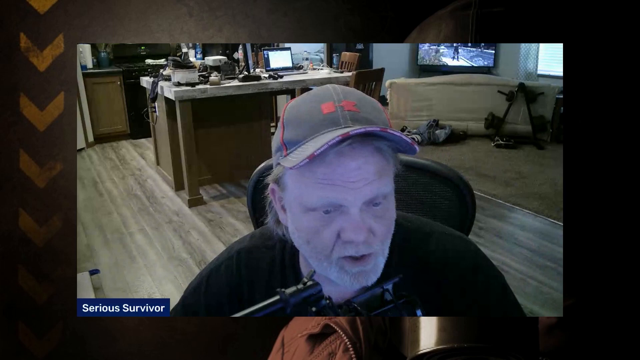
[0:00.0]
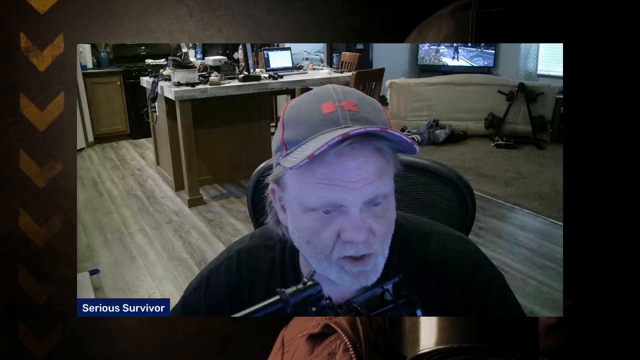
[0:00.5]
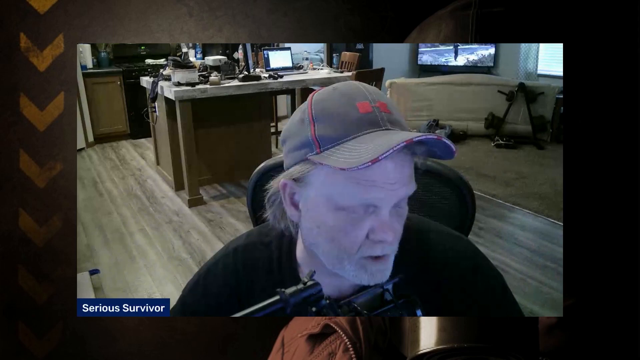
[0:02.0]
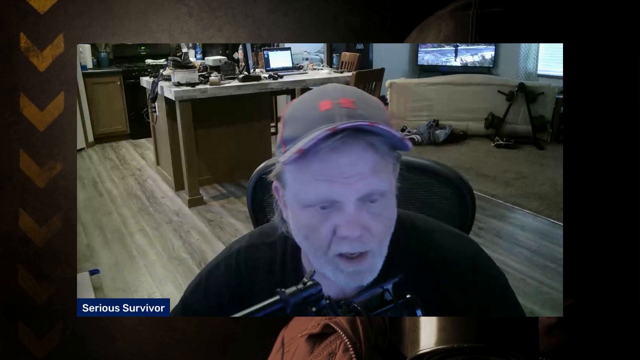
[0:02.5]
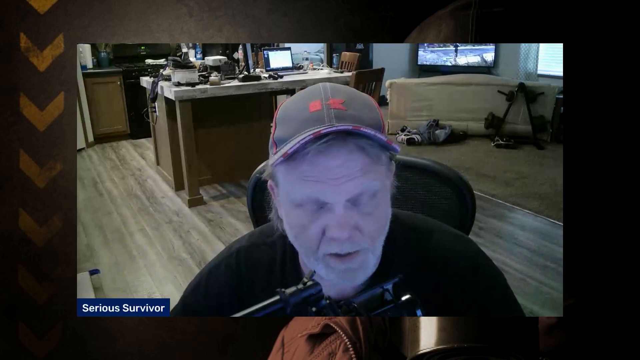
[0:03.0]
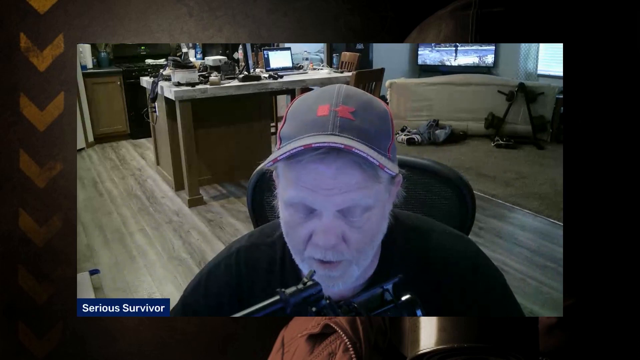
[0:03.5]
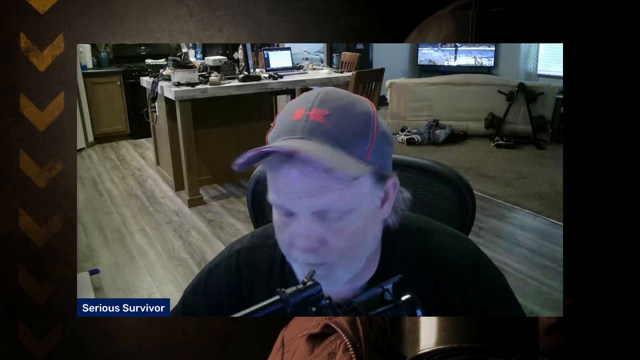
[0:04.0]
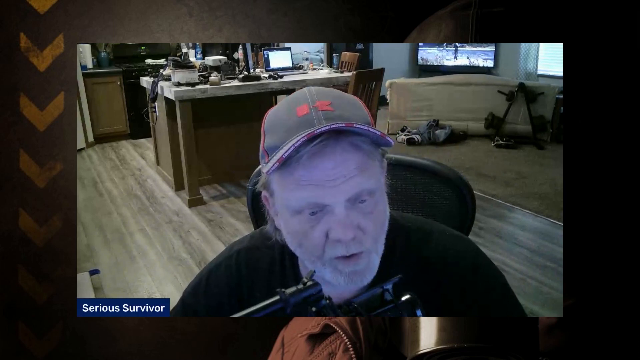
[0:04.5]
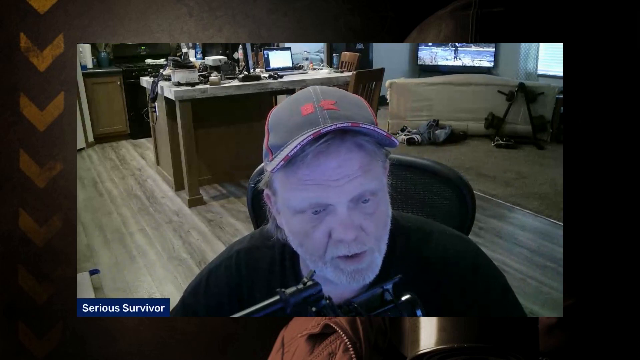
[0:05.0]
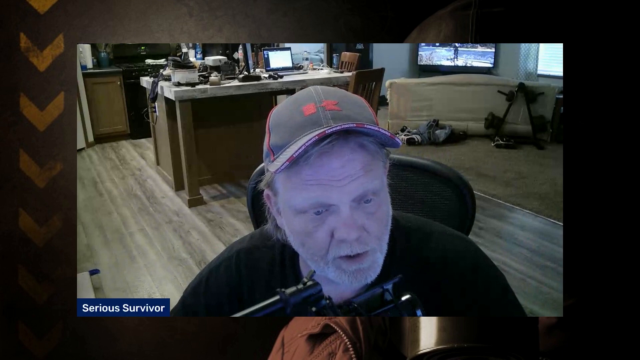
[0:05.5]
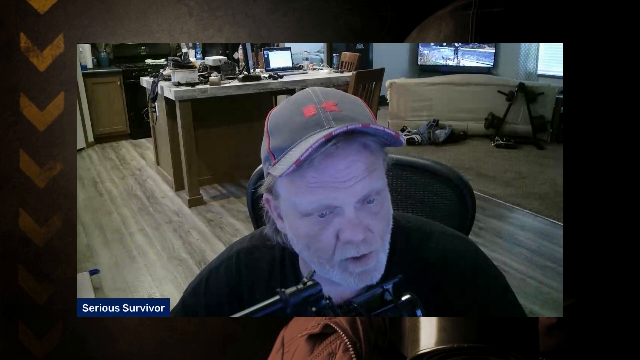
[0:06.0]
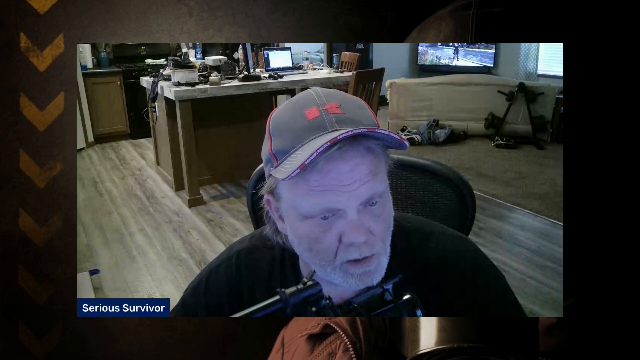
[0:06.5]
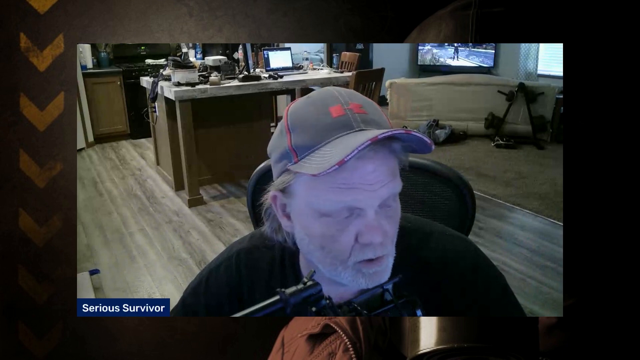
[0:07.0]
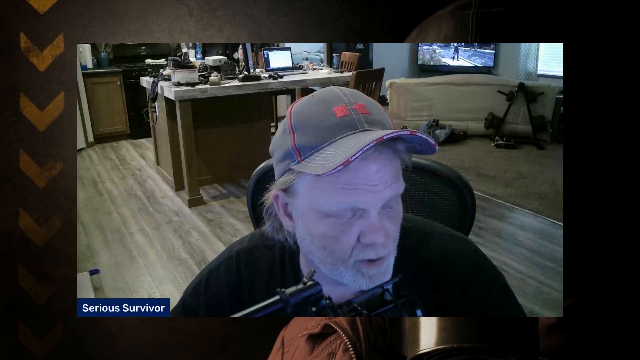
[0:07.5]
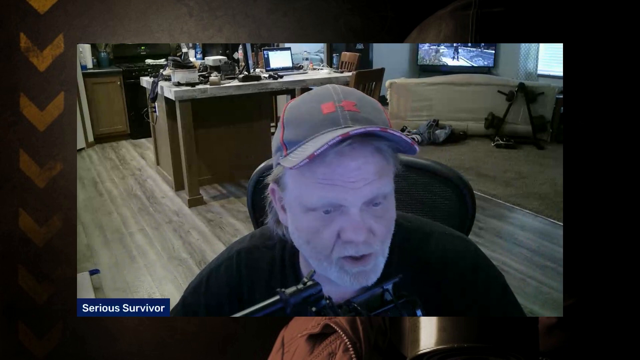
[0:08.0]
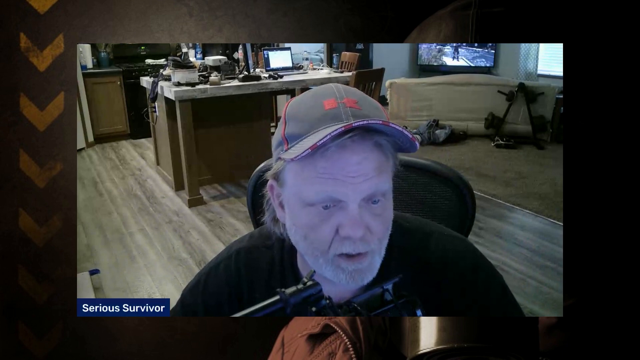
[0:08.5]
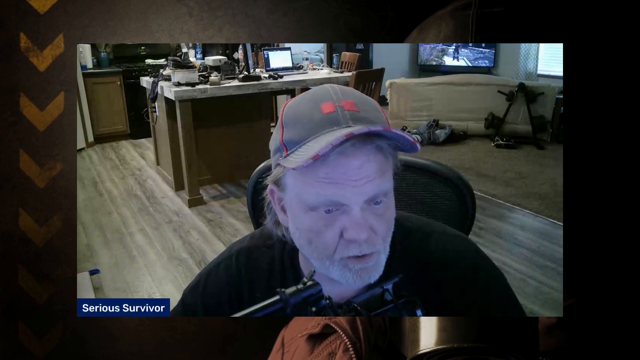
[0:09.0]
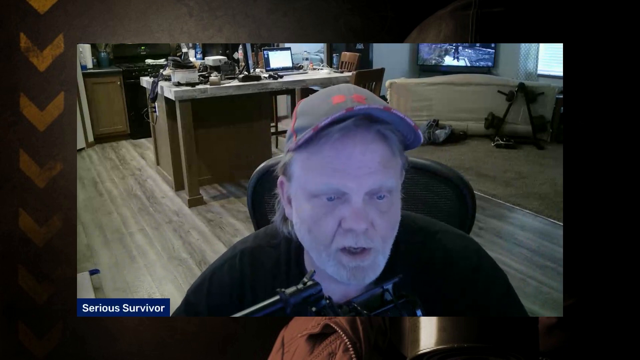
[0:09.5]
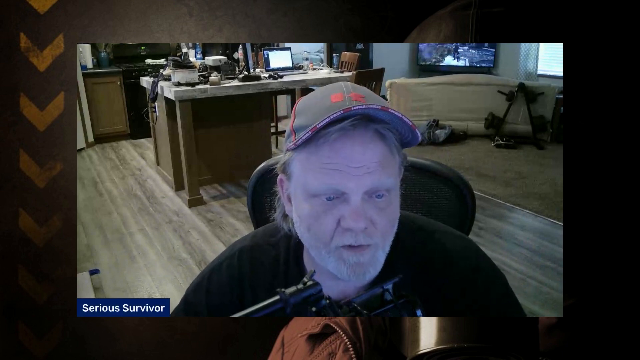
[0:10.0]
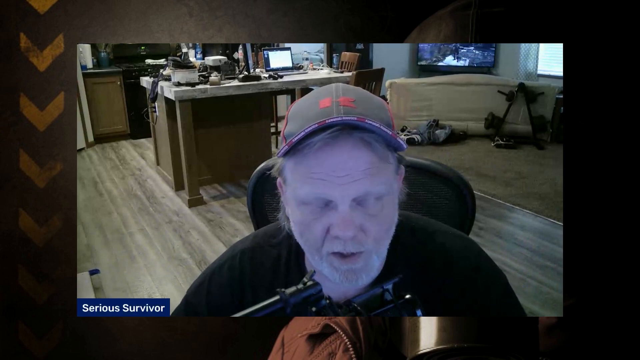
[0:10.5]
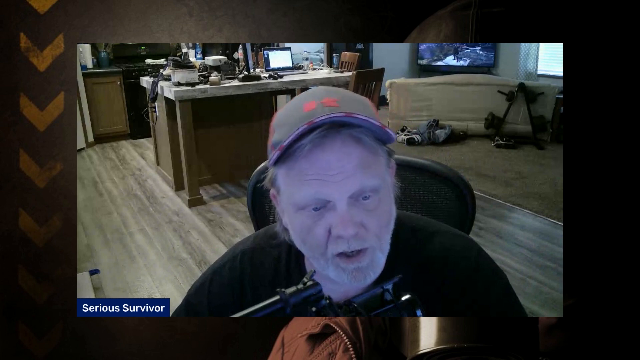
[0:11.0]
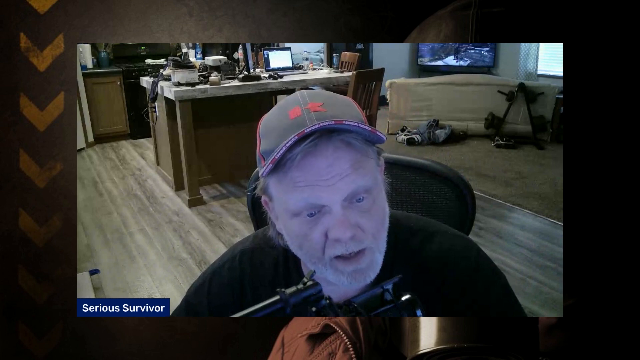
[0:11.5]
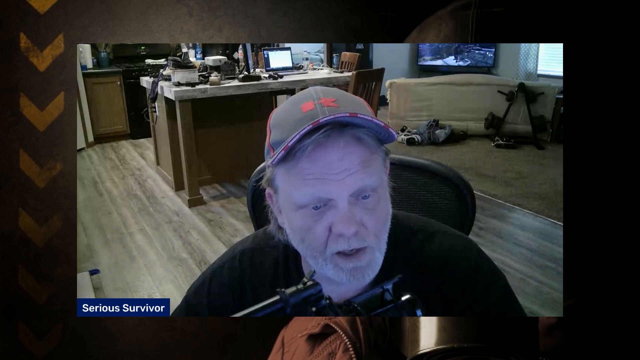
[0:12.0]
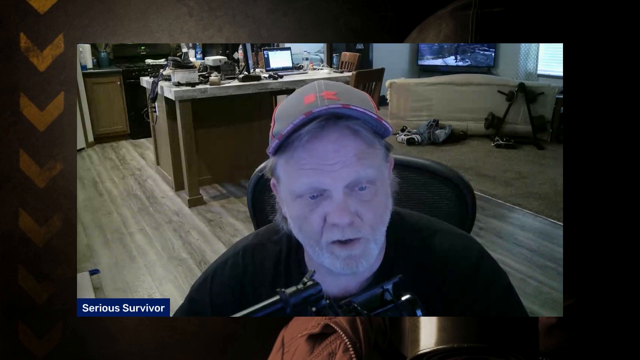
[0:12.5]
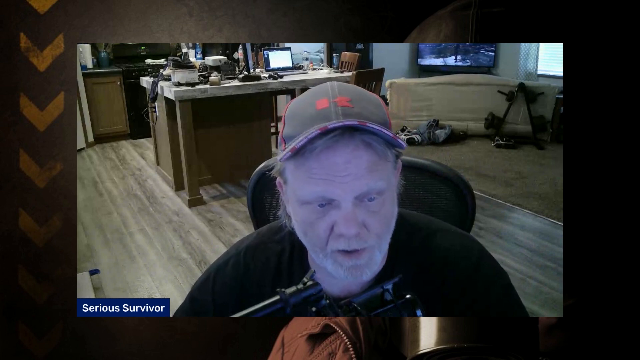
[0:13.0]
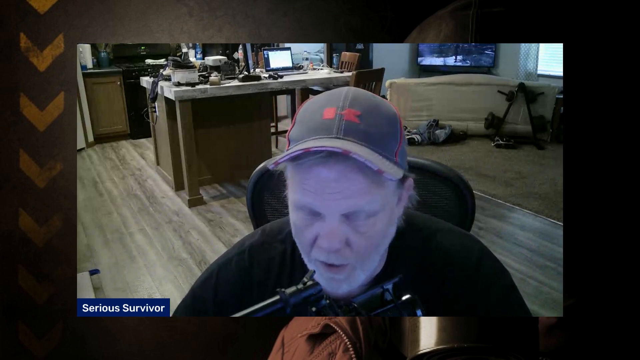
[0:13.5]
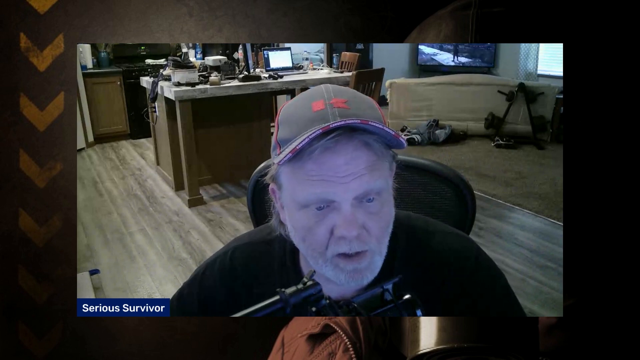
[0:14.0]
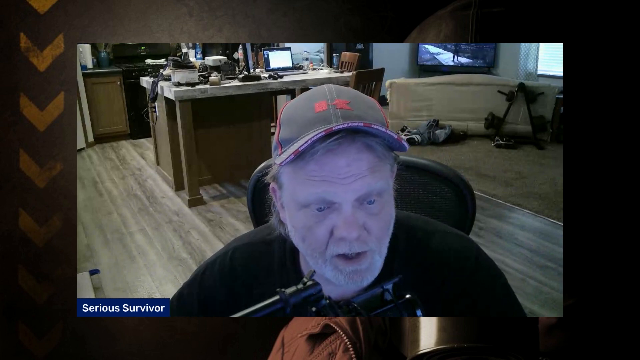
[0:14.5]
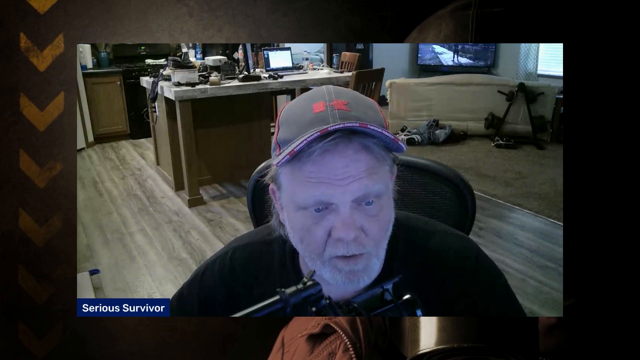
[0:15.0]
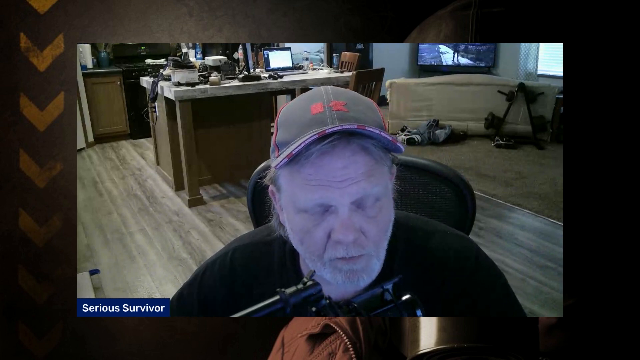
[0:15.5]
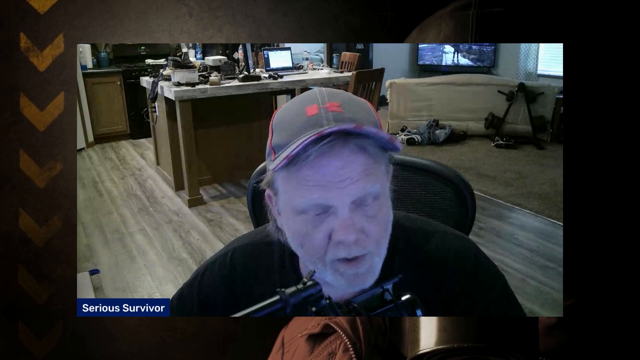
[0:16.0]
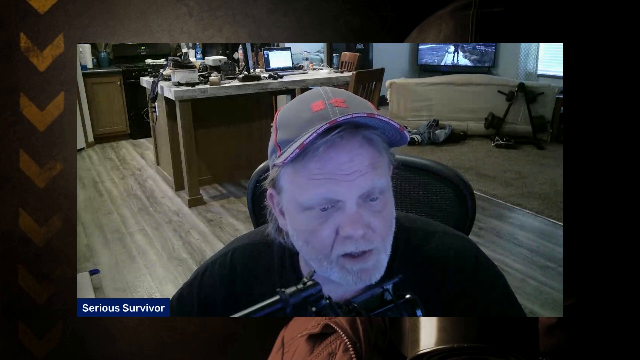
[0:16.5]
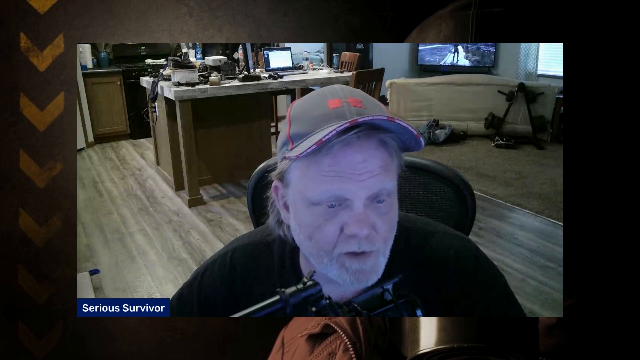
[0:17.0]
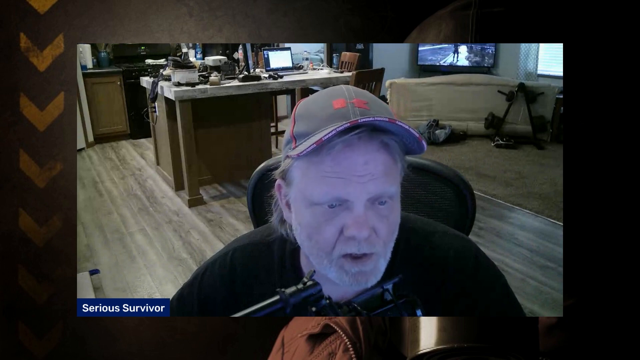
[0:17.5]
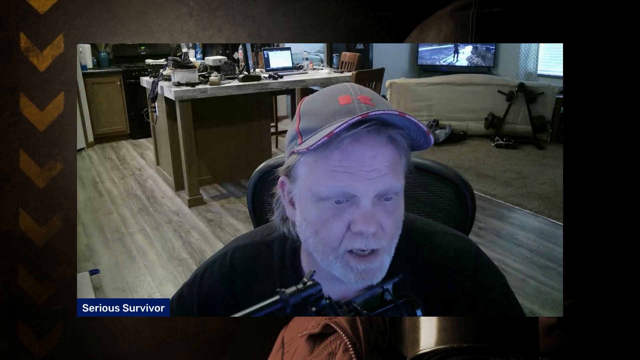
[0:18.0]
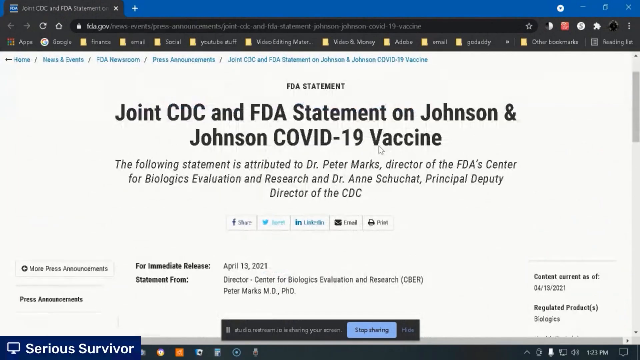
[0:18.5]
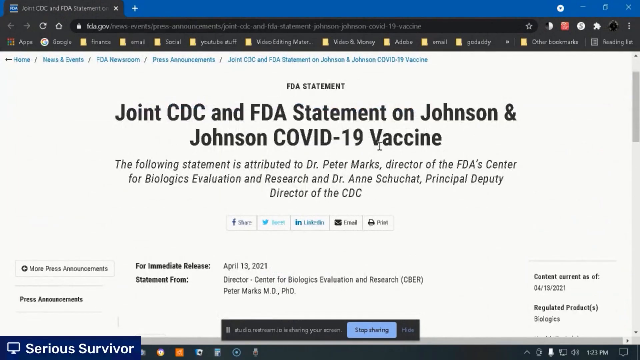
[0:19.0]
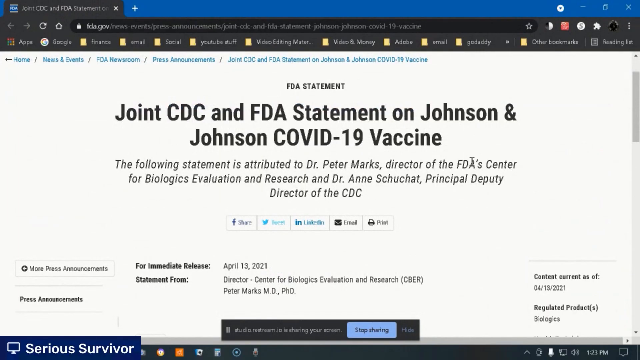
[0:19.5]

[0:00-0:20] An older man with relatively white skin and a cap on is sitting in a room, speaking into a microphone, apparently from his home. He has a straggly beard and a rough kind of look, and he seems to be talking and interested, delivering some kind of information. In the background are a desk, a couch and a TV that is playing, and there seems to be clutter. On-screen text says "serious survivor" and "joint CDC and FDA." There seems to be a computer, with text that includes "CDC" and "Johnson's COVID-19," though not all of the words are readable.